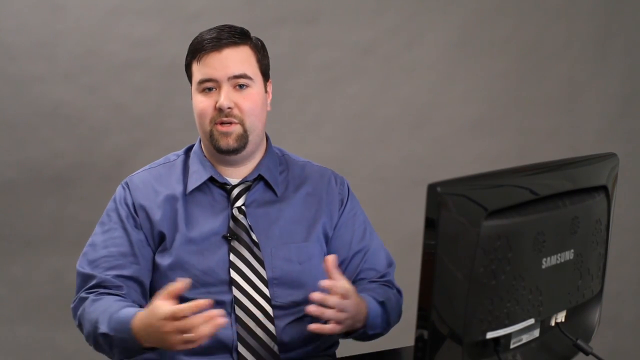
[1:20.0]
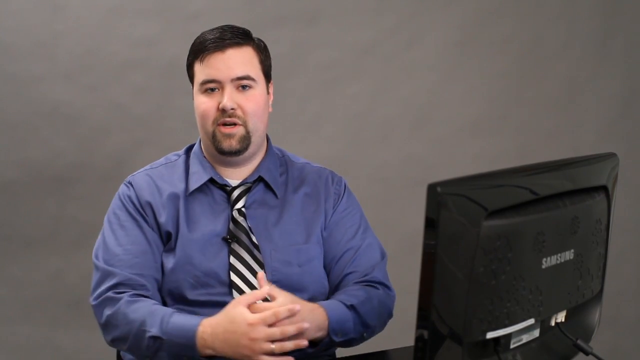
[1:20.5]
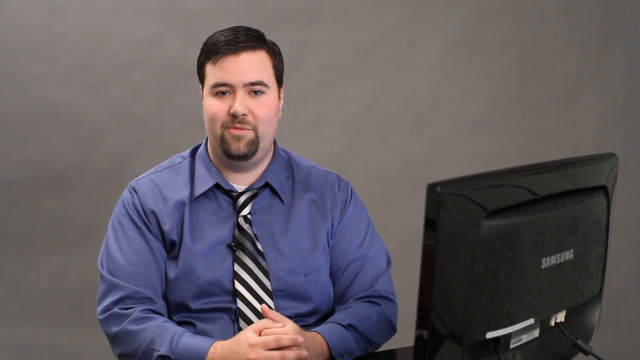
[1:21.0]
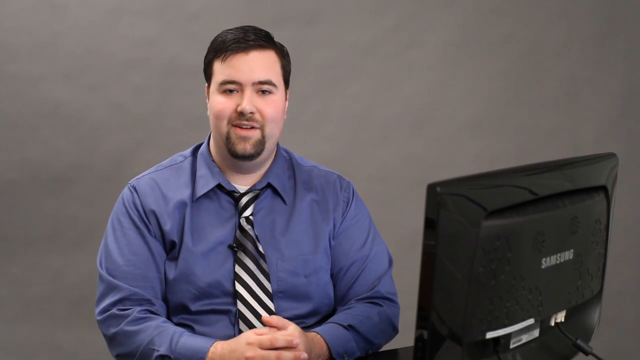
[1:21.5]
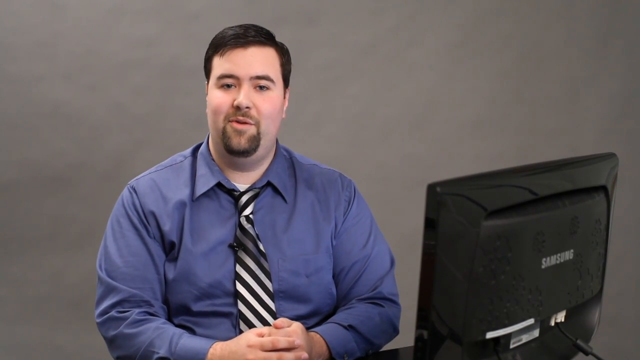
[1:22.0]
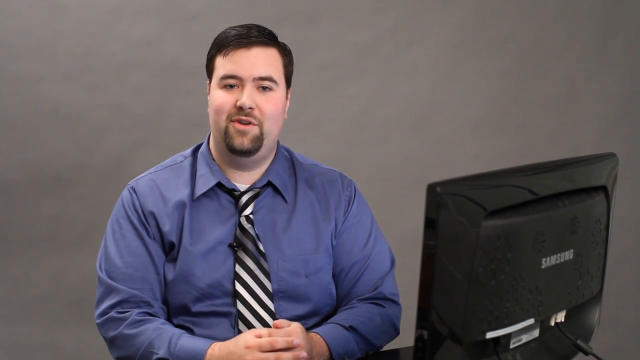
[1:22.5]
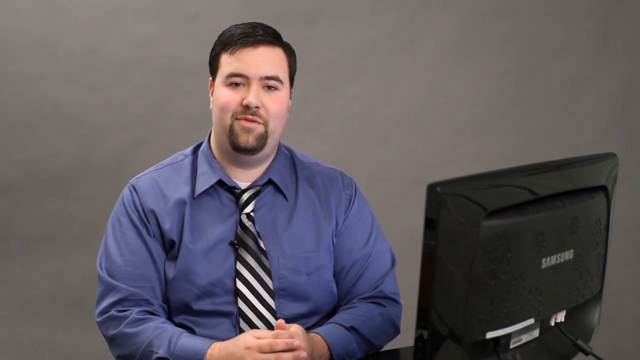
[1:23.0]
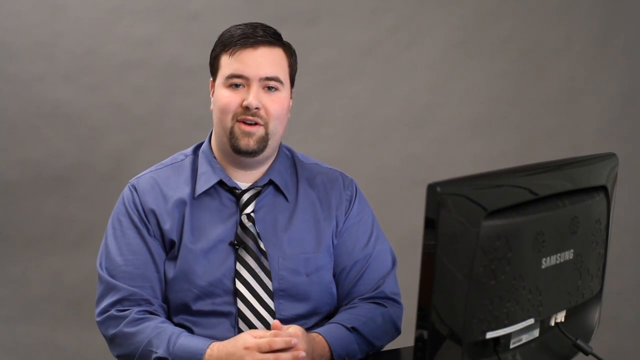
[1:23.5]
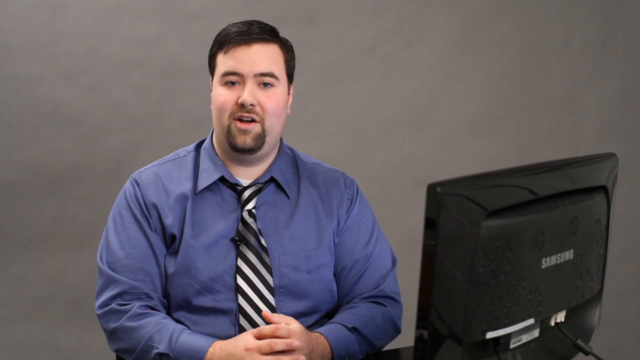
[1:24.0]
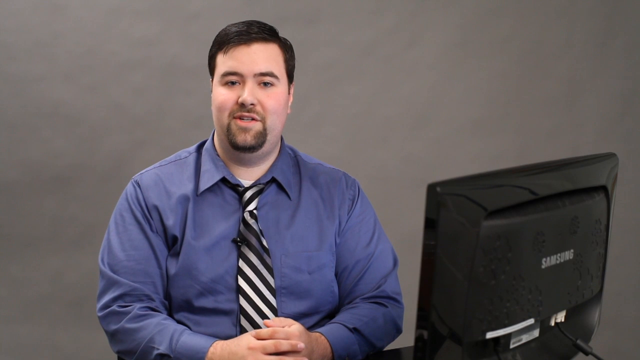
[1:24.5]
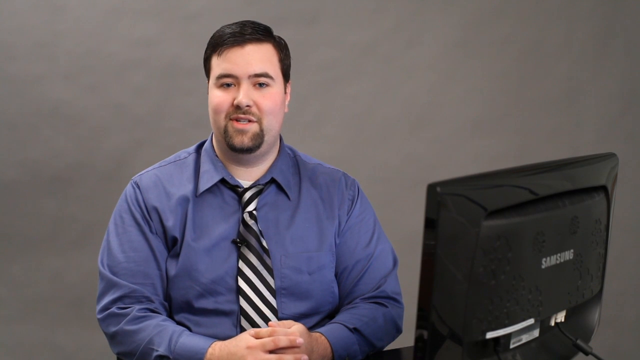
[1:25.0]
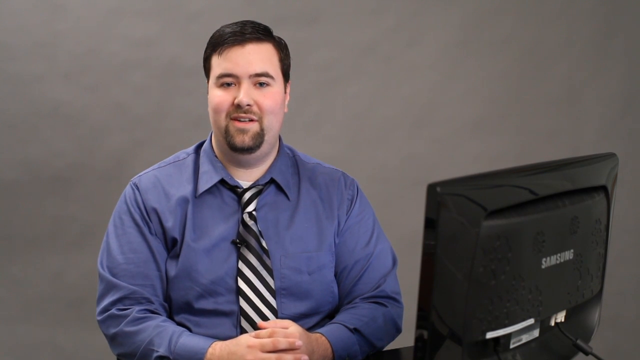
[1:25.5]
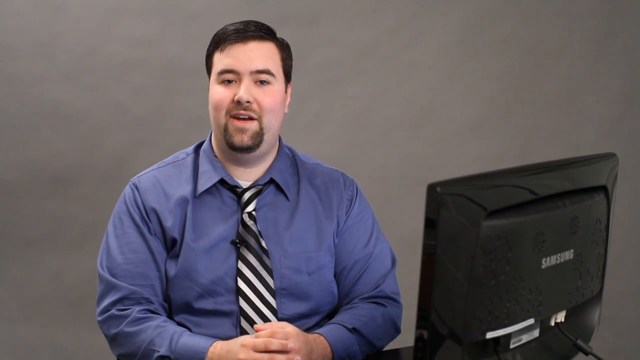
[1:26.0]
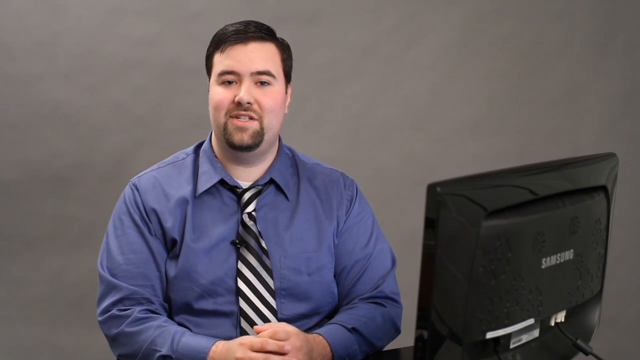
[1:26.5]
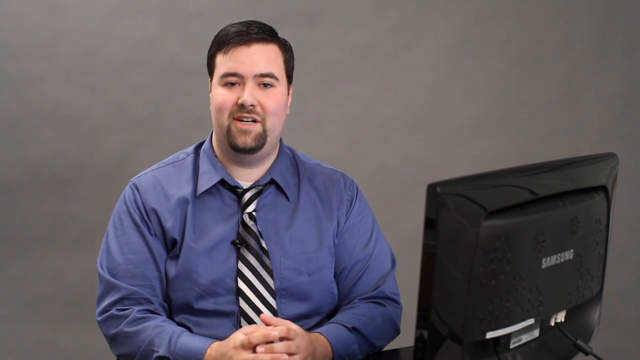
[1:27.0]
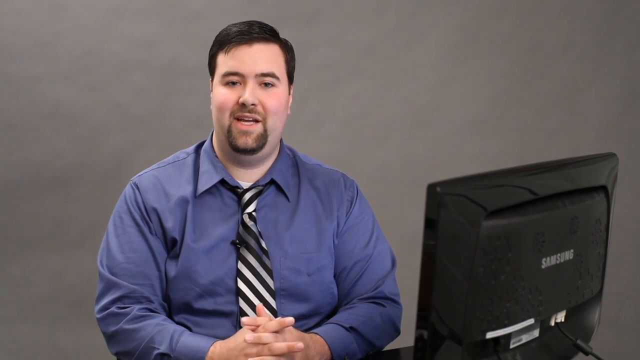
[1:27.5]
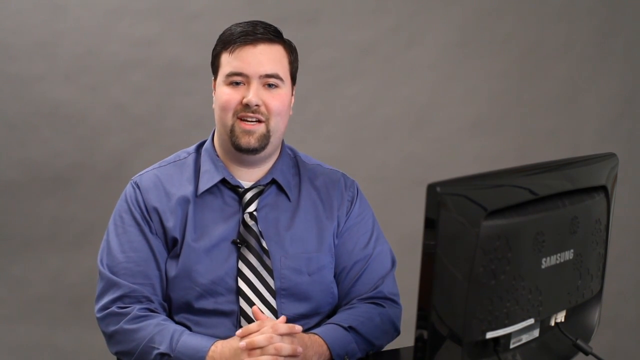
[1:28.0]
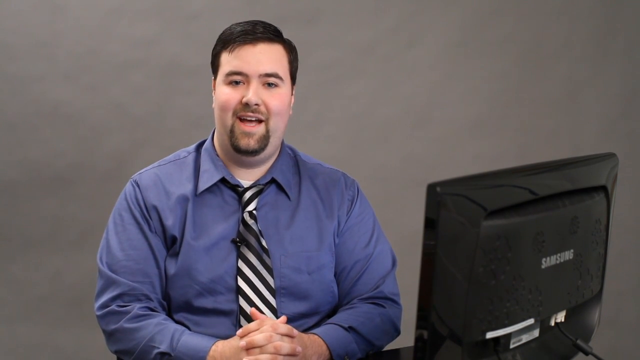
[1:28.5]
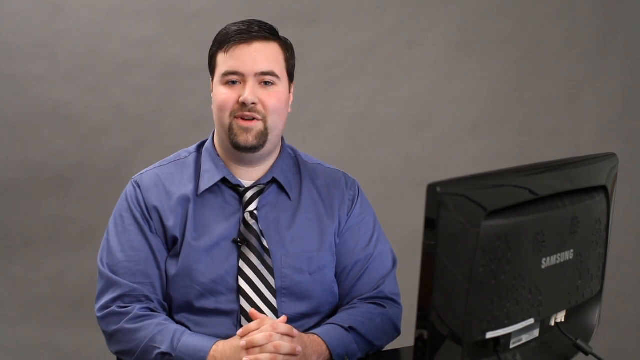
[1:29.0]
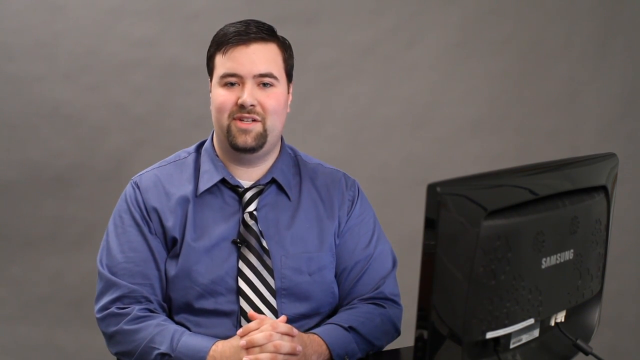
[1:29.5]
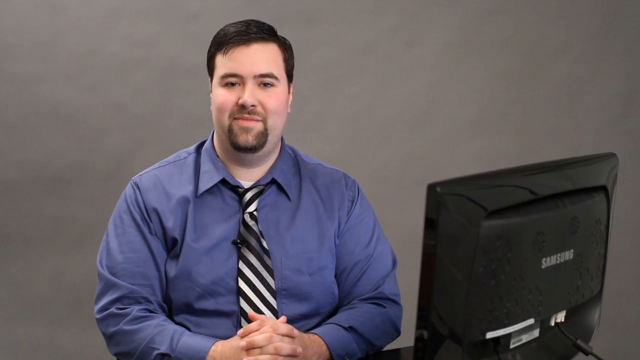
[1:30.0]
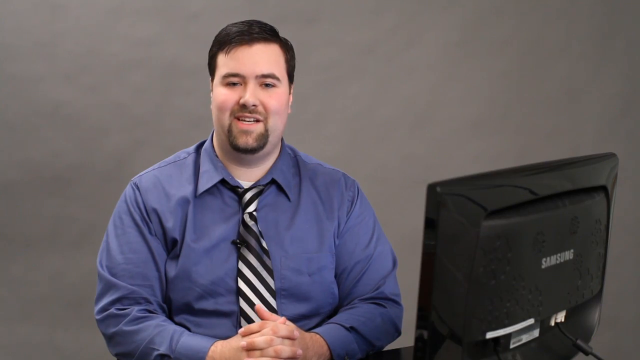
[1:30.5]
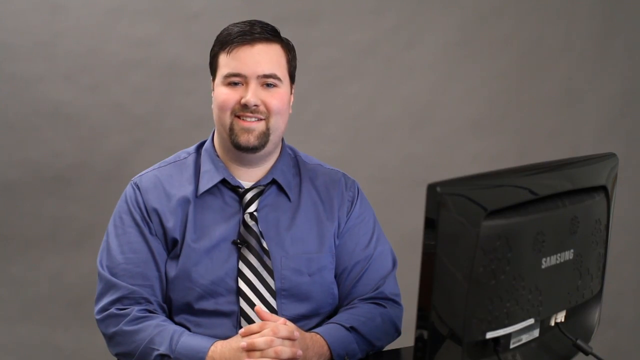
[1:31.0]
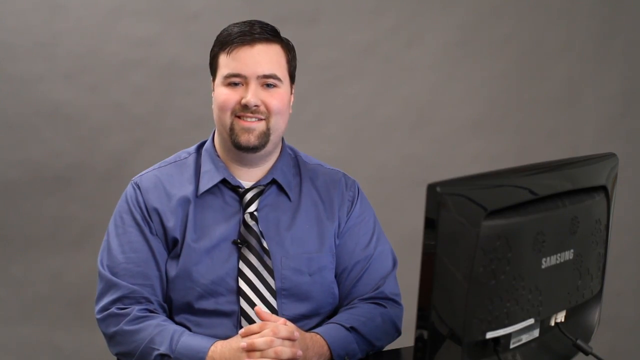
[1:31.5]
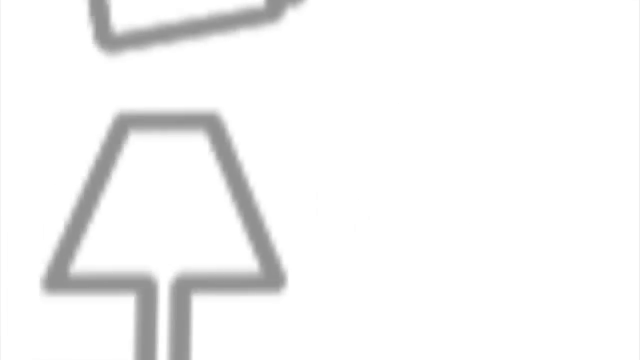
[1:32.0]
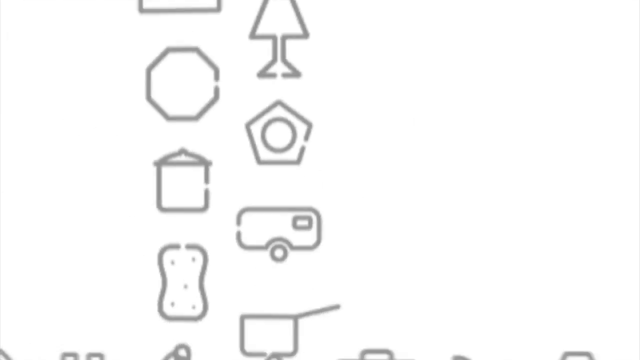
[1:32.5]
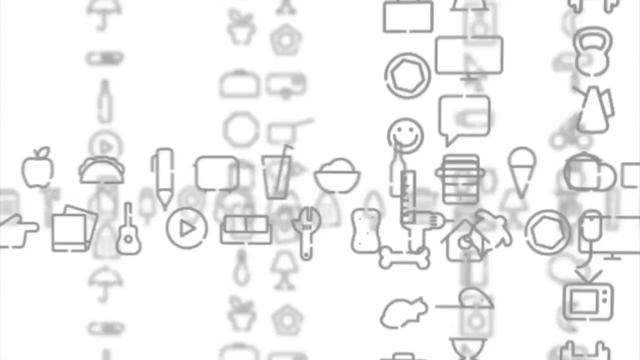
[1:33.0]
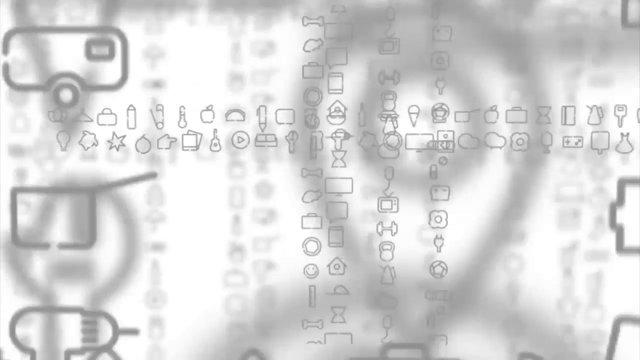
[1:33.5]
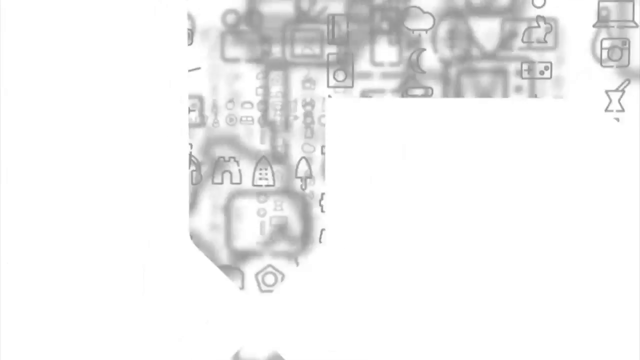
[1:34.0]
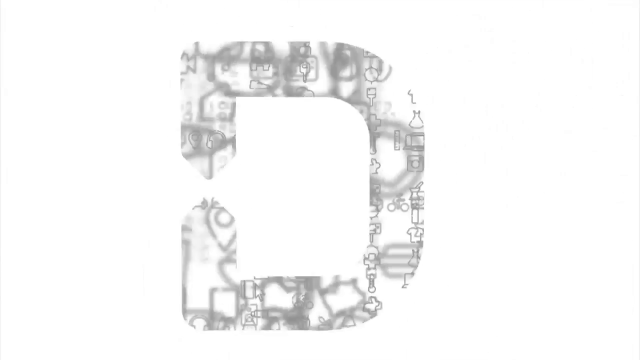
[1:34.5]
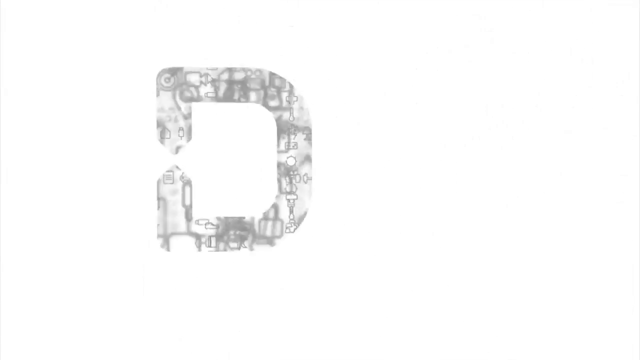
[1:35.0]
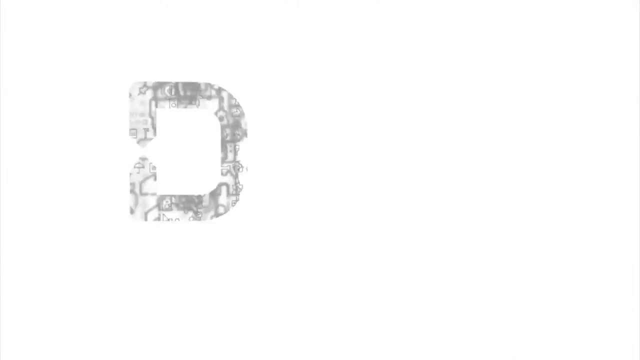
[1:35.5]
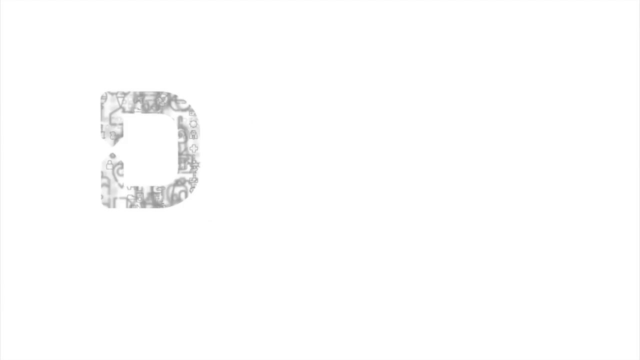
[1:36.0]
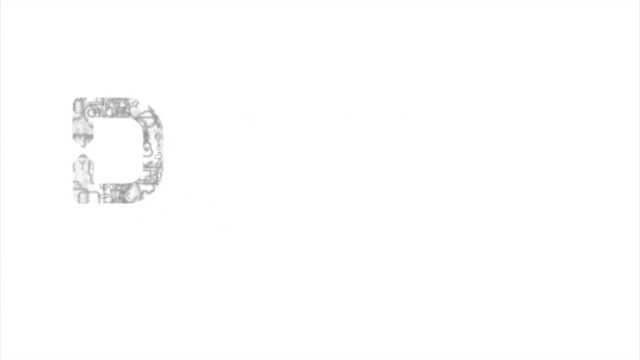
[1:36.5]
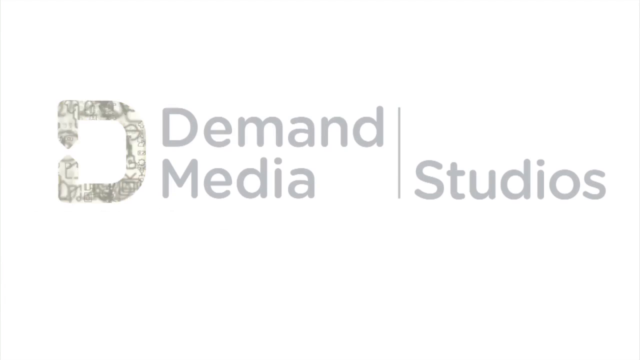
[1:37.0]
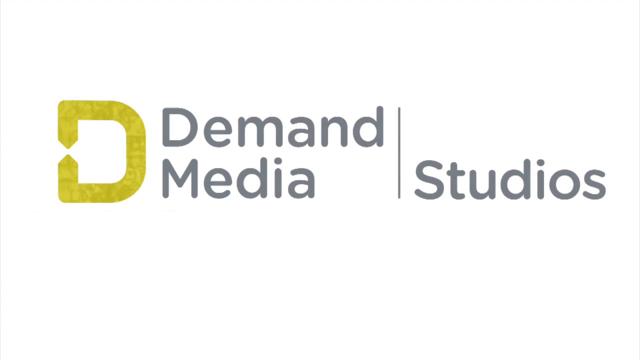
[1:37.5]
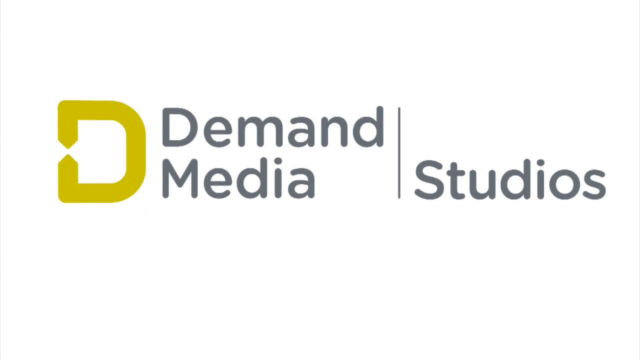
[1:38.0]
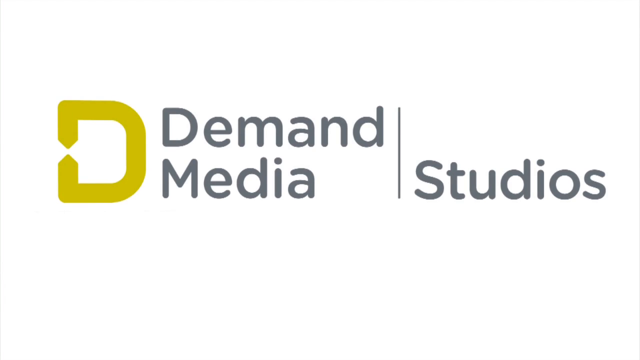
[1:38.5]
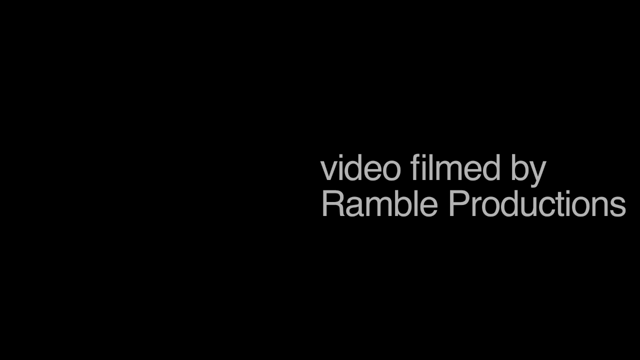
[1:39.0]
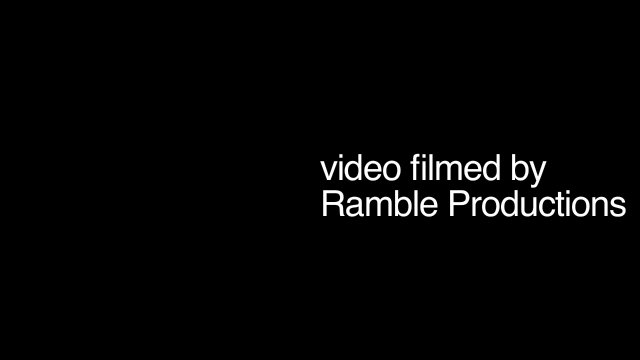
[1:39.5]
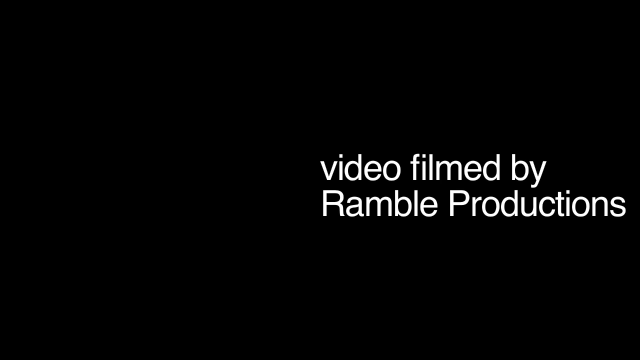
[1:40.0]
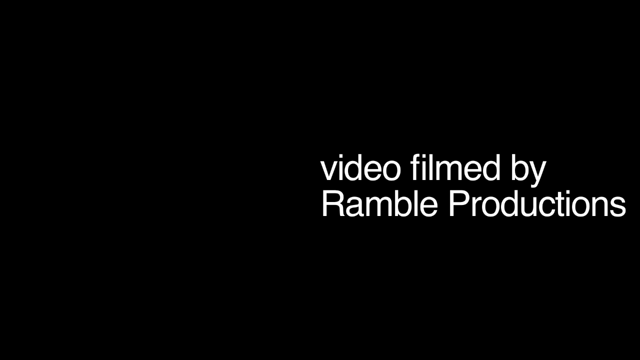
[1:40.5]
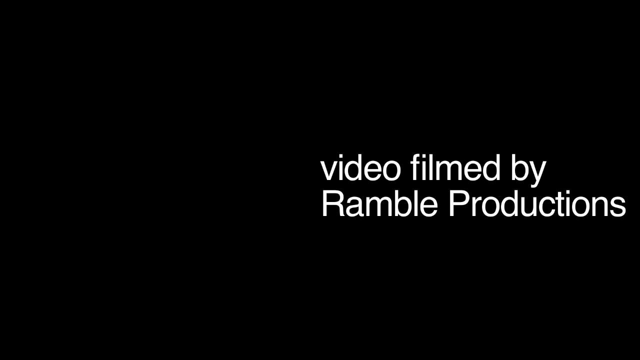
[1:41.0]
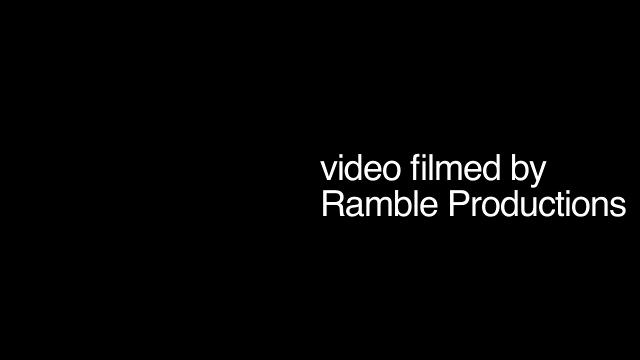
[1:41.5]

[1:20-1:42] He speaks directly to the camera, not really using his hands; they rest clasped on the table and he is very still as he says his parting words. The video then fades to white for the ending credits, which show a grid-like pattern of many emojis, including bowls of rice, a wrench, a play button, a guitar, a smiley face, a talk bubble and an ice cream cone. It zooms out to reveal the letter D, which turns what looks like mustard yellow, with the name of the studio that produced the video, "Demand Media Studios," to its right. It then cuts to black with text reading "video filmed by Ramble Productions."